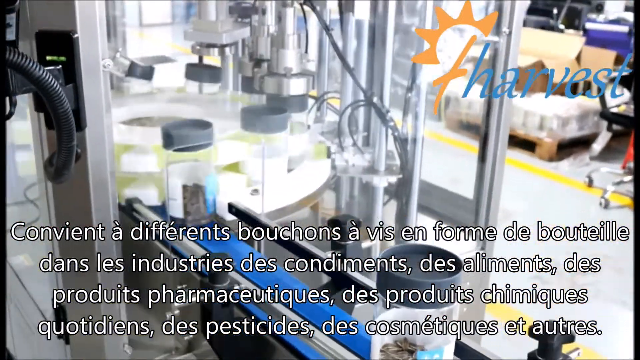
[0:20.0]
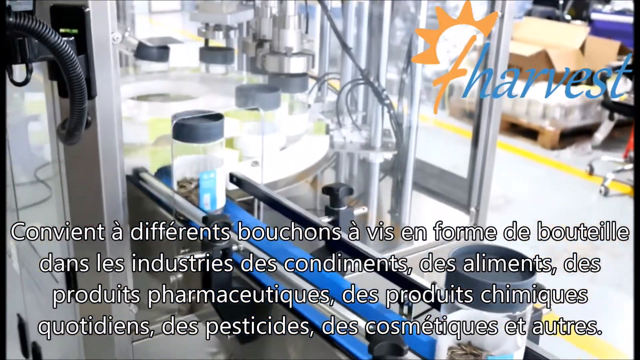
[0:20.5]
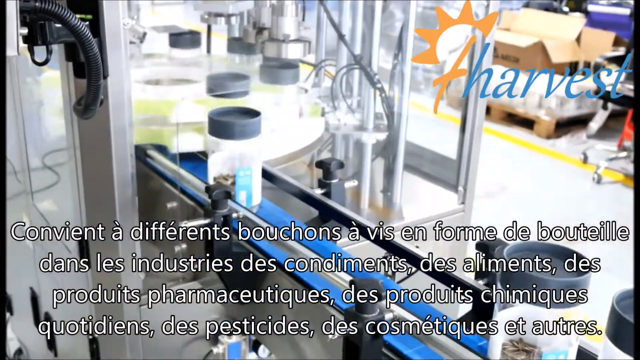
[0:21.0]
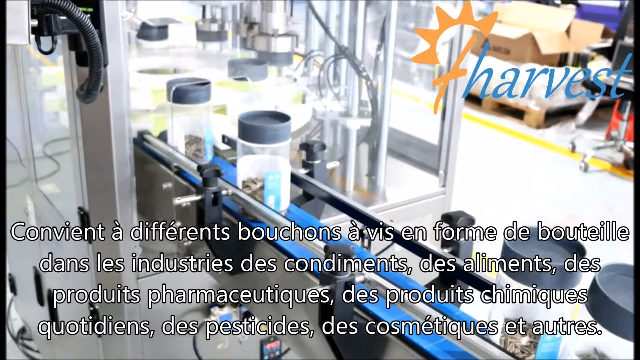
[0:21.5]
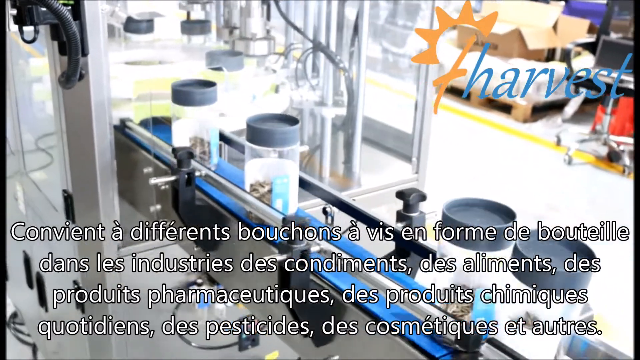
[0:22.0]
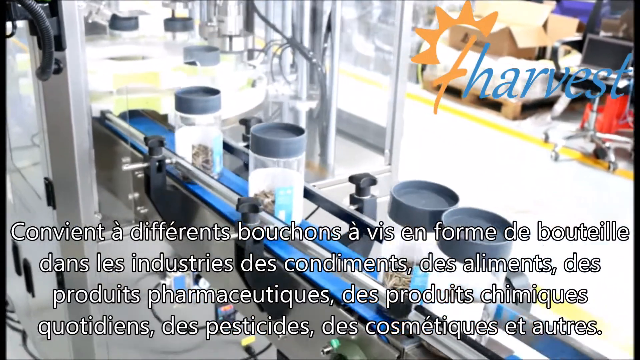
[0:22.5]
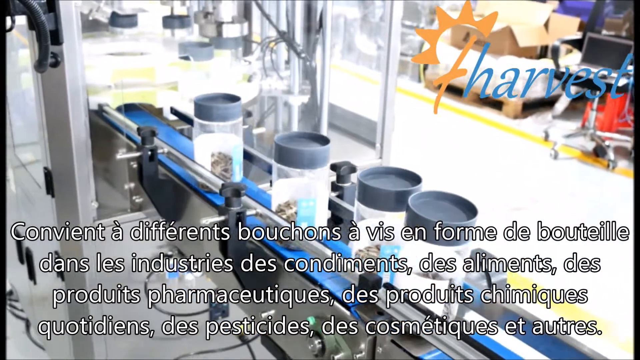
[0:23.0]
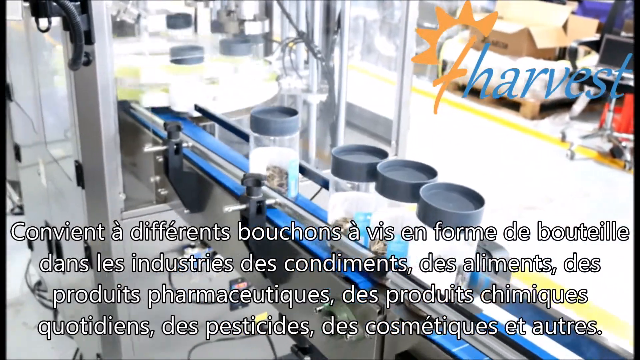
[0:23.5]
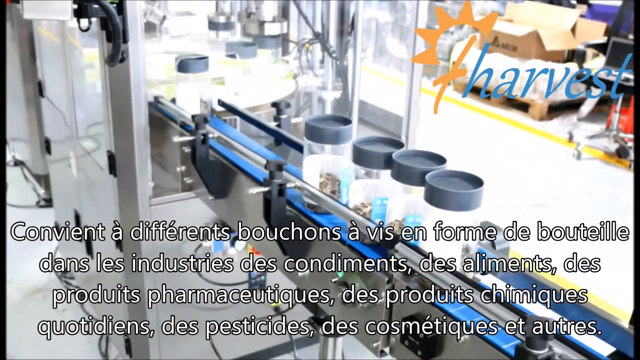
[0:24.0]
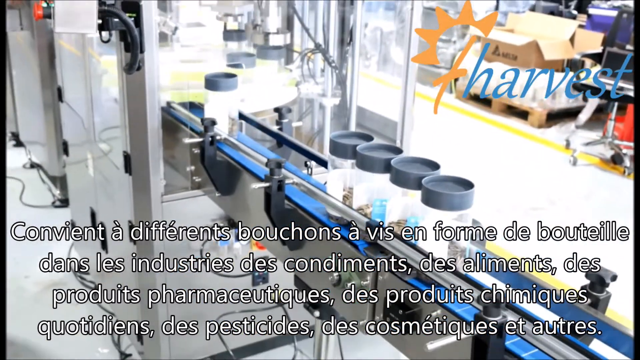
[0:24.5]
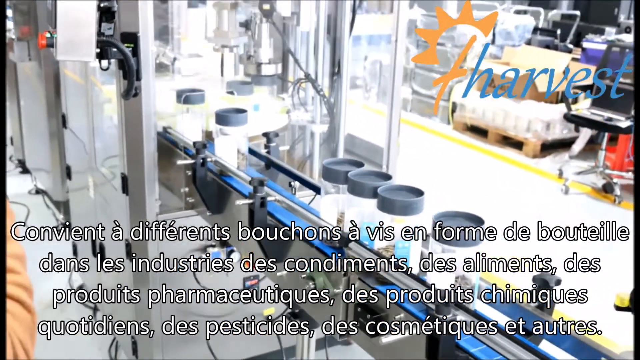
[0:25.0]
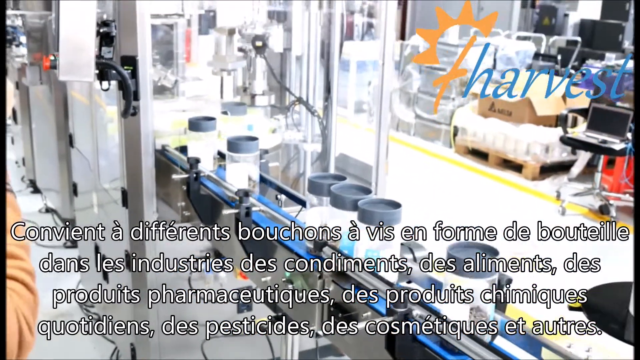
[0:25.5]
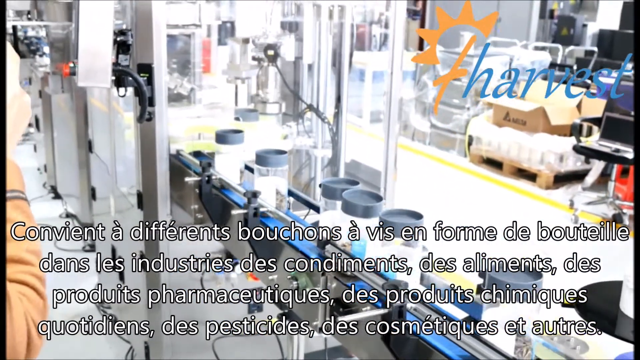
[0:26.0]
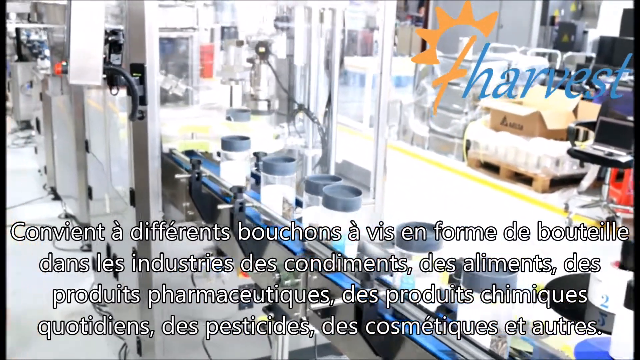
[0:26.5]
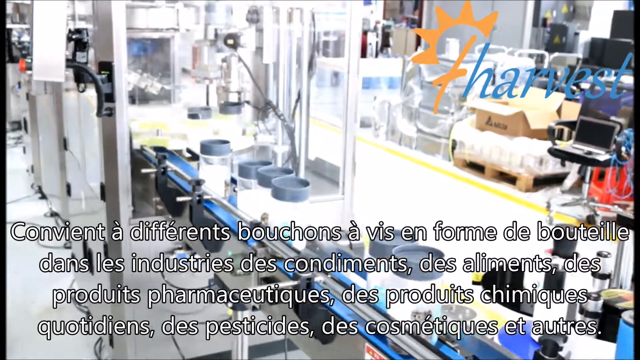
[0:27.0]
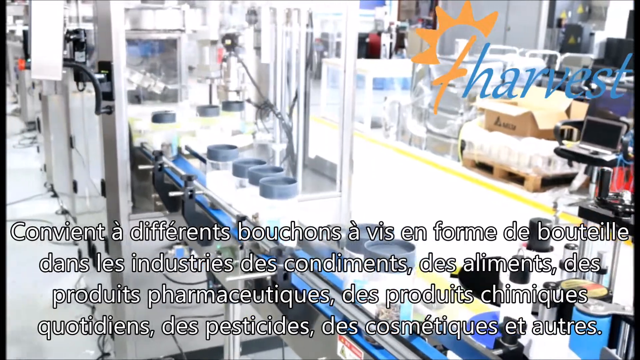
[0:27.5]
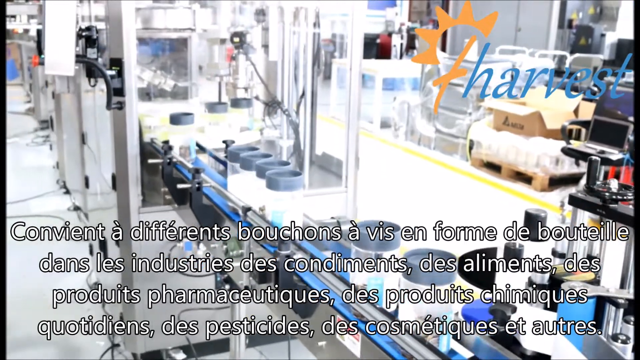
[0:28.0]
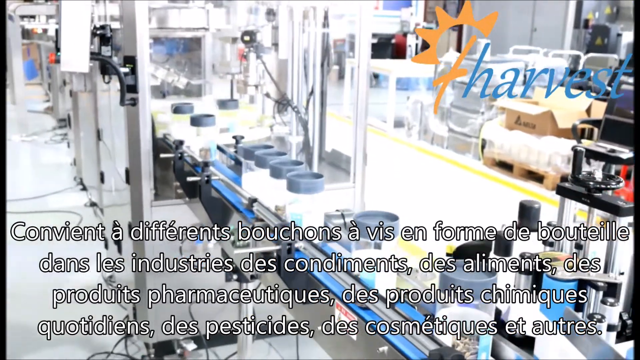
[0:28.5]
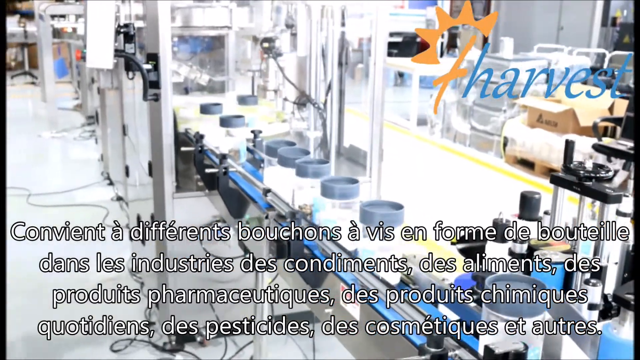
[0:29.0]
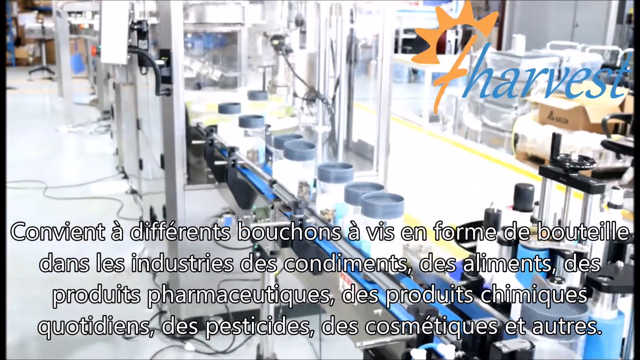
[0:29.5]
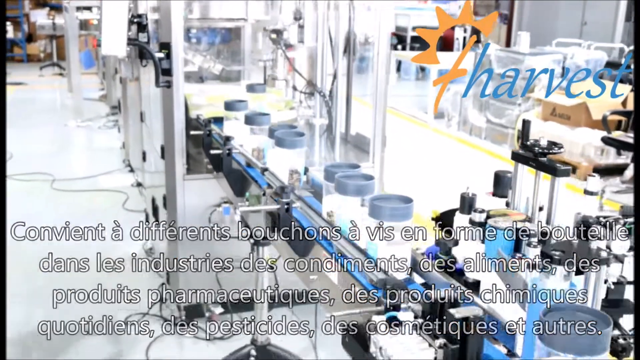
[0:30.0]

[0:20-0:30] The camera follows see-through glass bottles along a conveyor belt line with bluish lining as gray lids are pressed onto them. A person's shoulder or hand is visible on the left side of the screen; they wear an orange long-sleeve shirt. A silver machine presses the lids down, twisting them on. French text in white appears in the bottom third of the screen, and "Harvest" remains in the top right corner with the orange sun rays. On the right side of the screen is an open brown cardboard box with its flaps open, and there seems to be something purple to the top right of it. The floors of the laboratory or manufacturing facility are silver-white and very shiny, and everything is very bright.